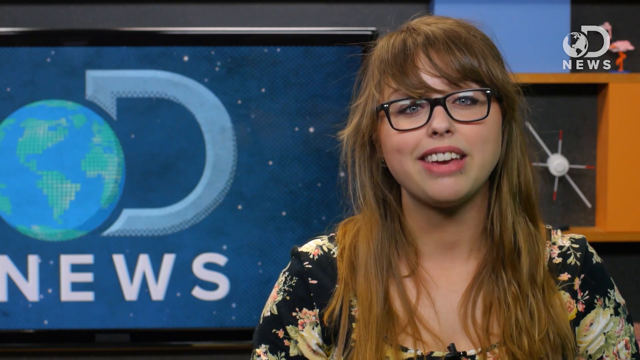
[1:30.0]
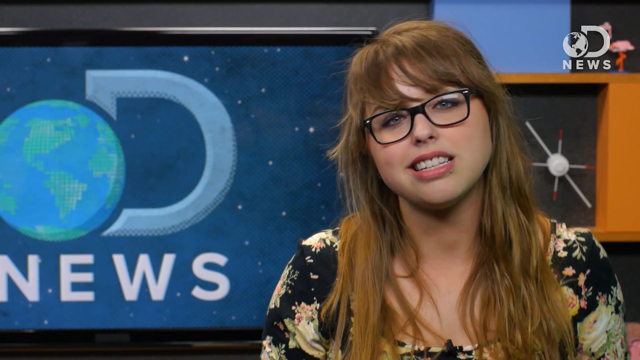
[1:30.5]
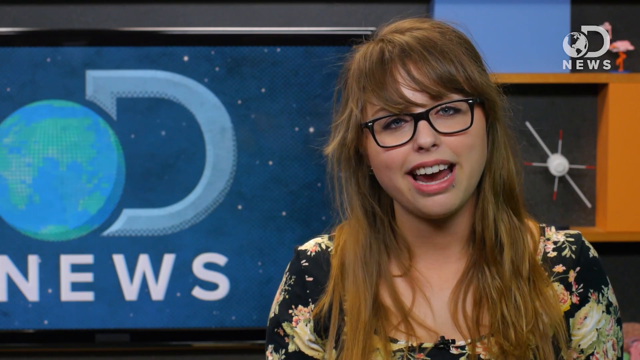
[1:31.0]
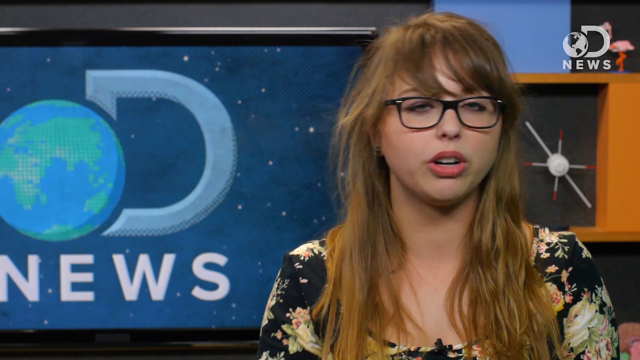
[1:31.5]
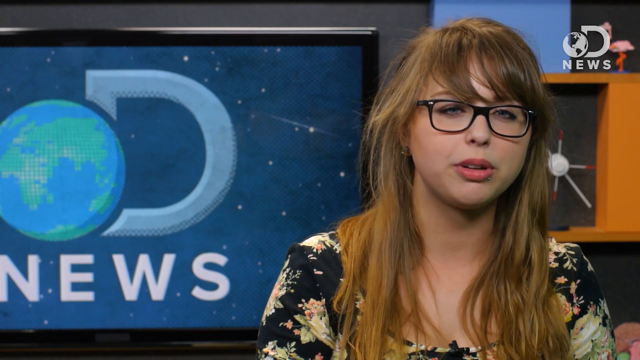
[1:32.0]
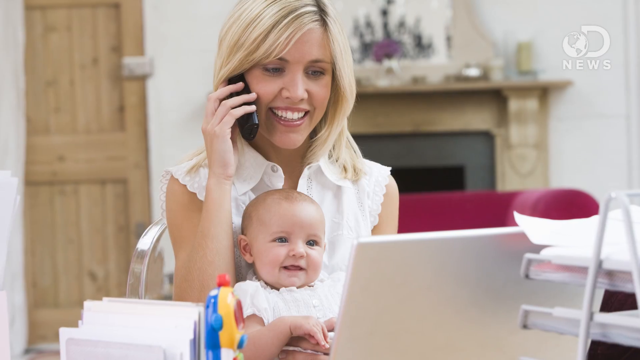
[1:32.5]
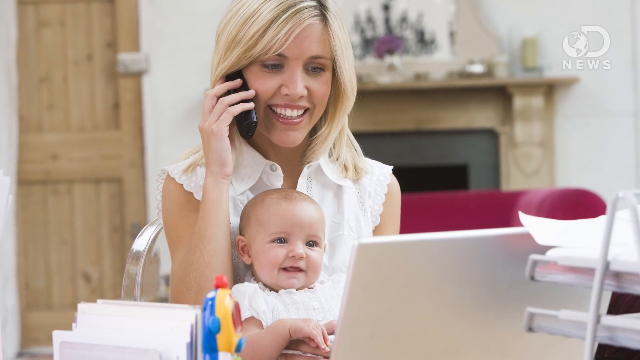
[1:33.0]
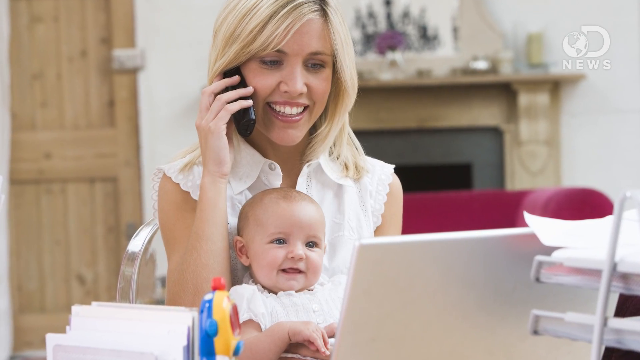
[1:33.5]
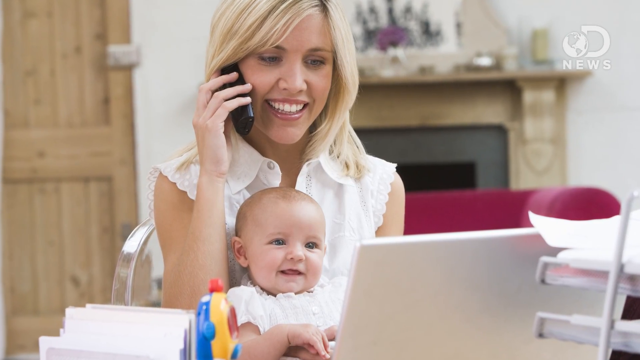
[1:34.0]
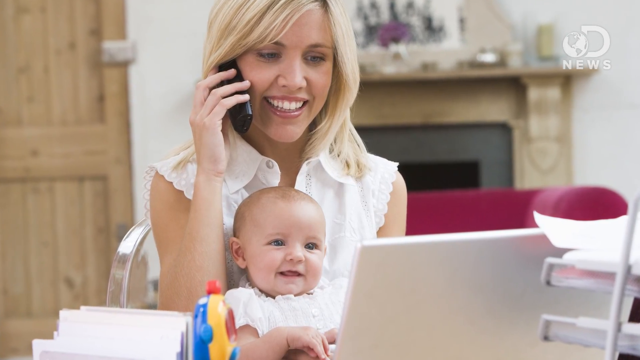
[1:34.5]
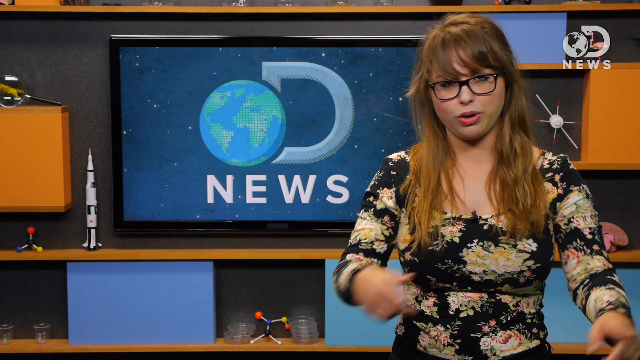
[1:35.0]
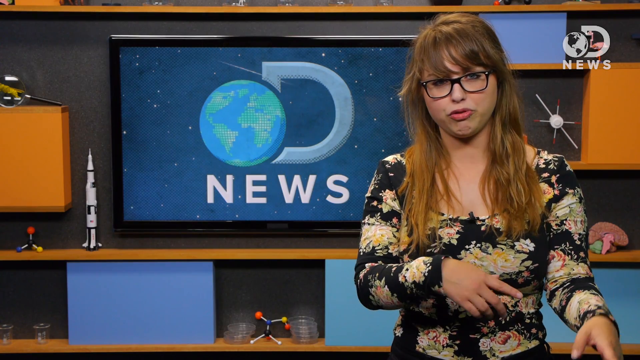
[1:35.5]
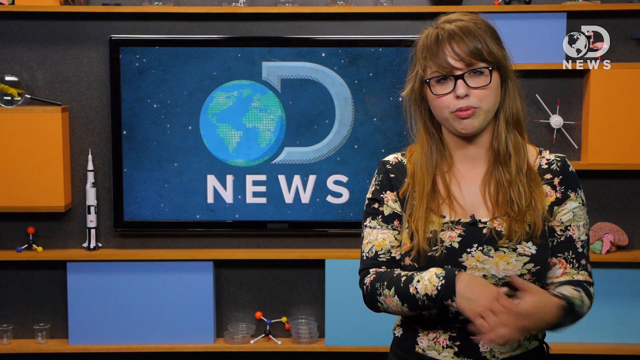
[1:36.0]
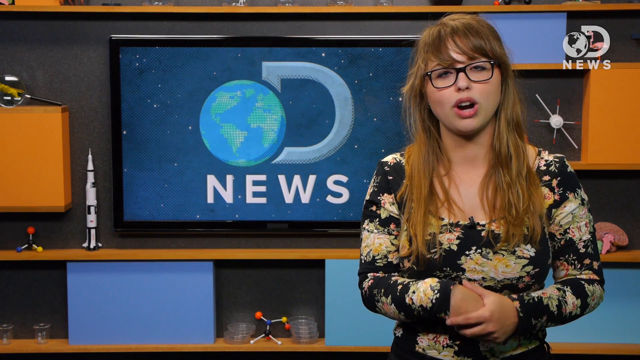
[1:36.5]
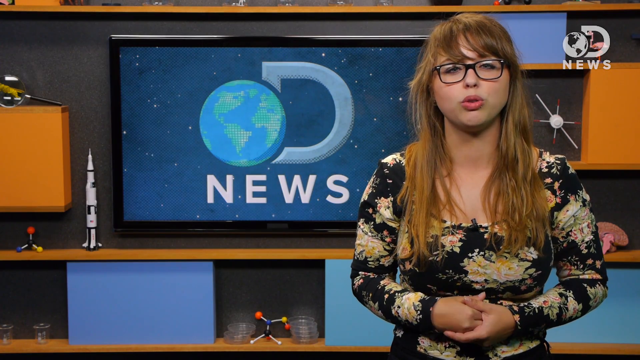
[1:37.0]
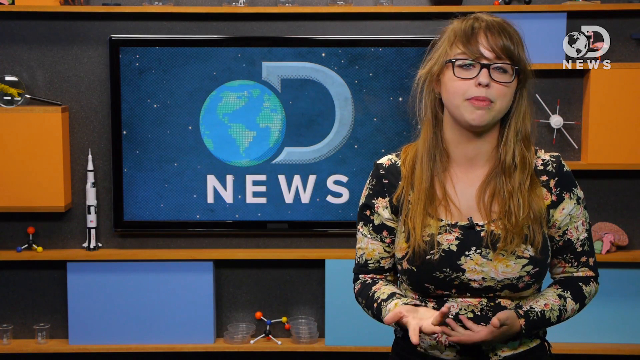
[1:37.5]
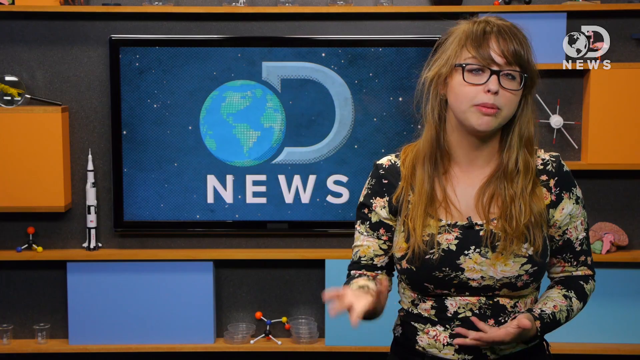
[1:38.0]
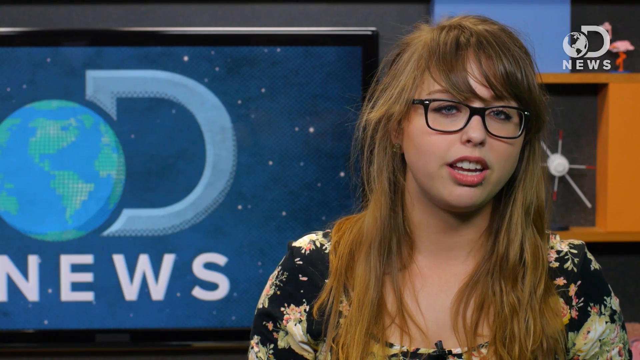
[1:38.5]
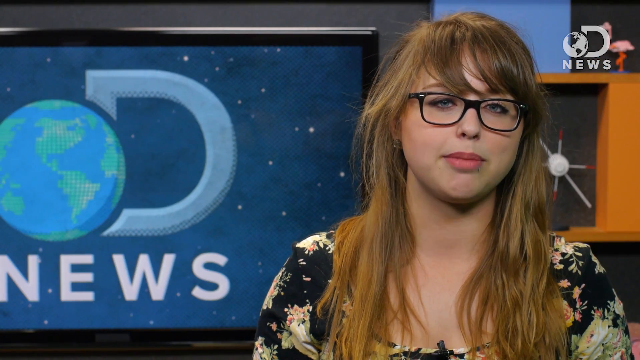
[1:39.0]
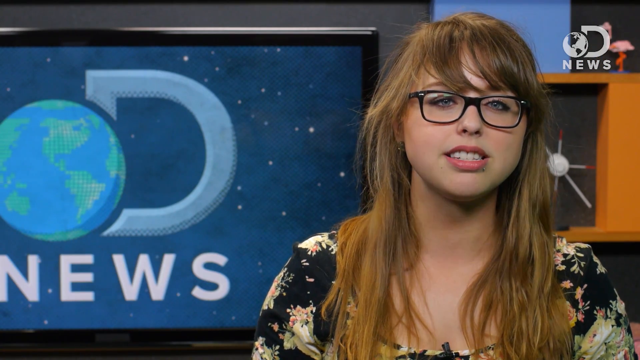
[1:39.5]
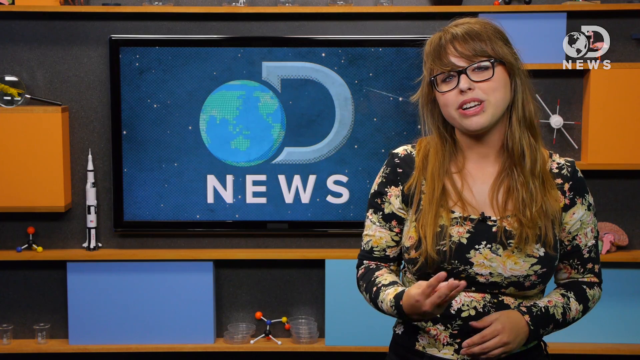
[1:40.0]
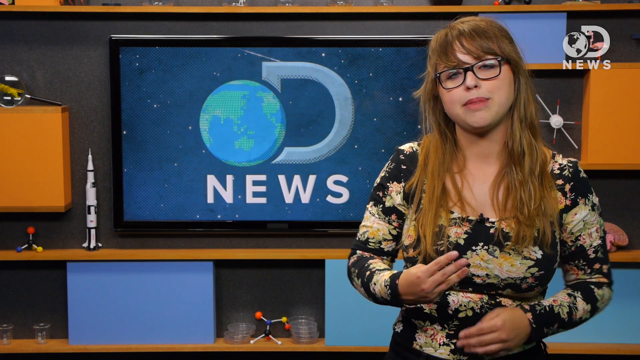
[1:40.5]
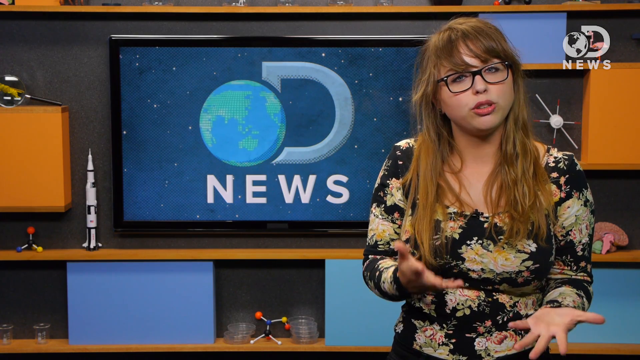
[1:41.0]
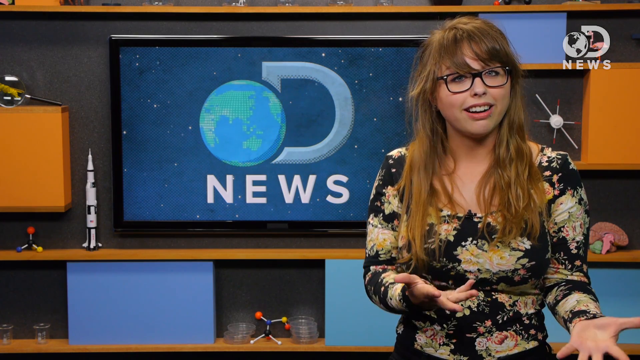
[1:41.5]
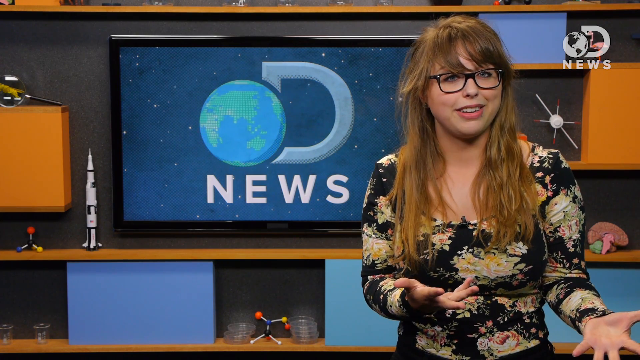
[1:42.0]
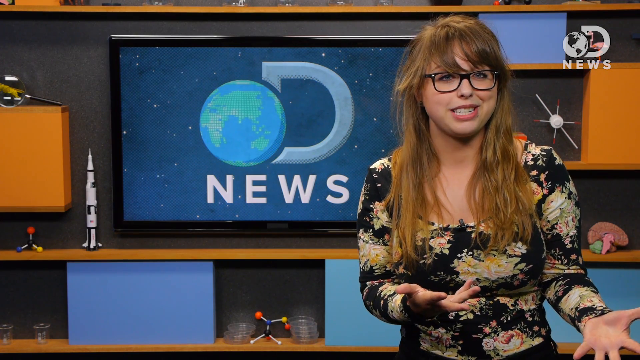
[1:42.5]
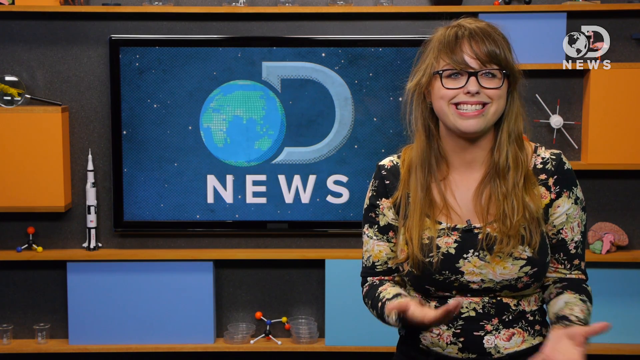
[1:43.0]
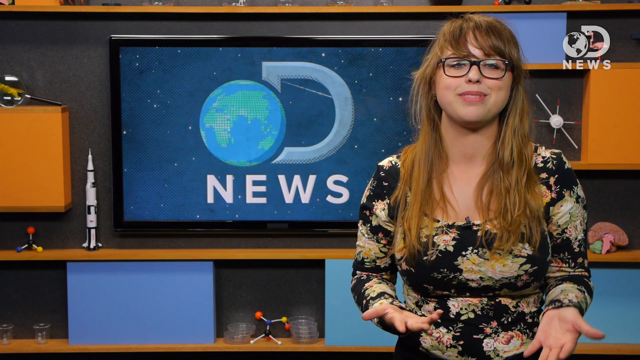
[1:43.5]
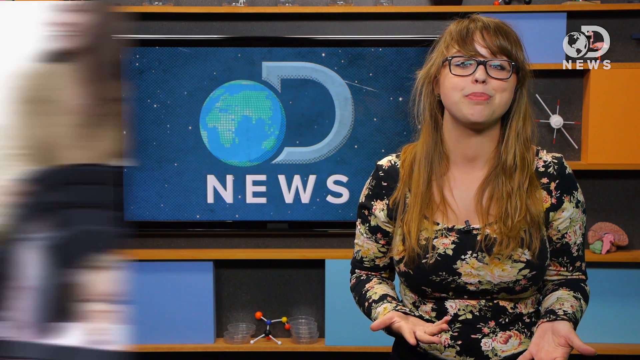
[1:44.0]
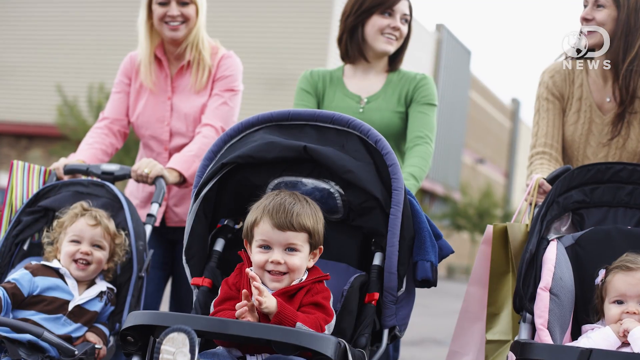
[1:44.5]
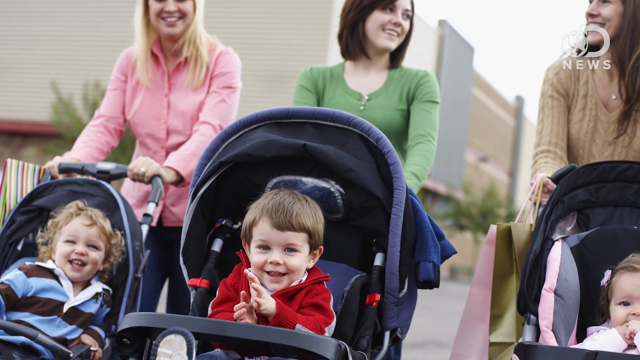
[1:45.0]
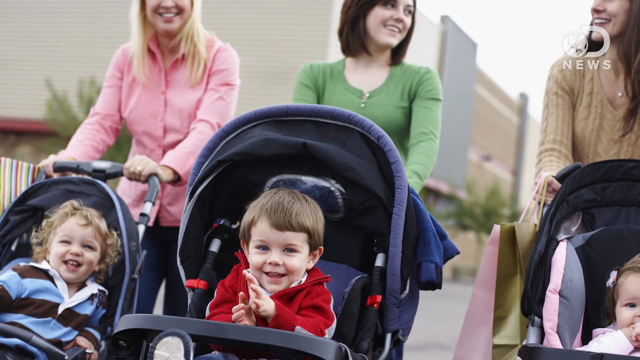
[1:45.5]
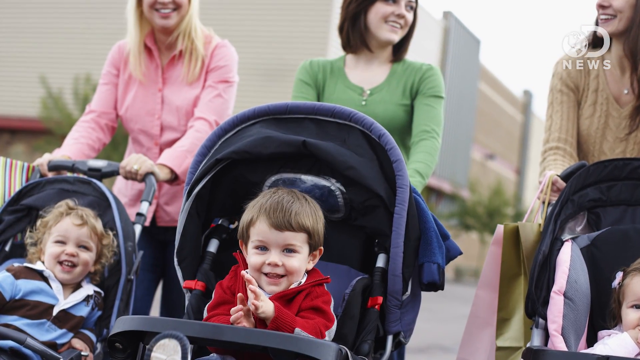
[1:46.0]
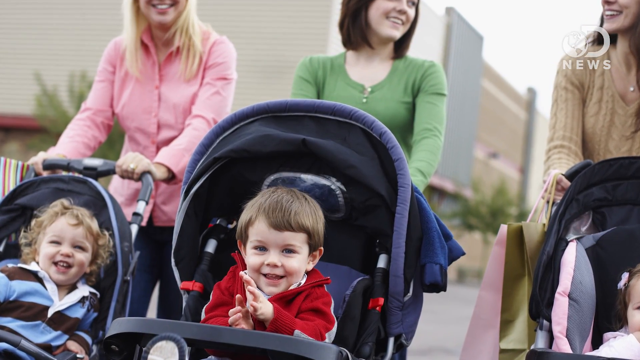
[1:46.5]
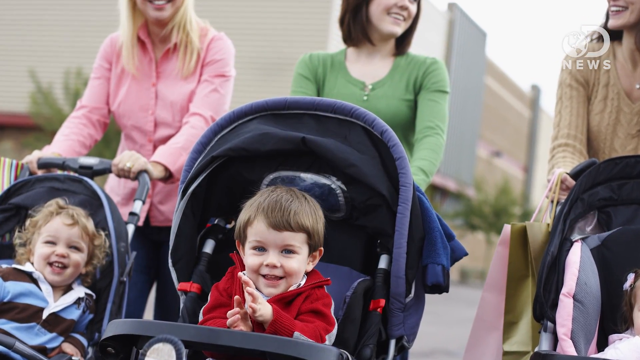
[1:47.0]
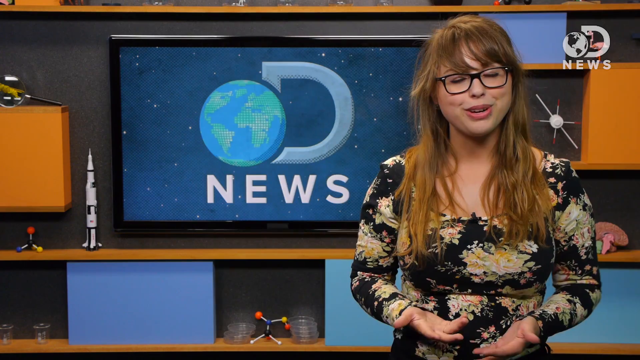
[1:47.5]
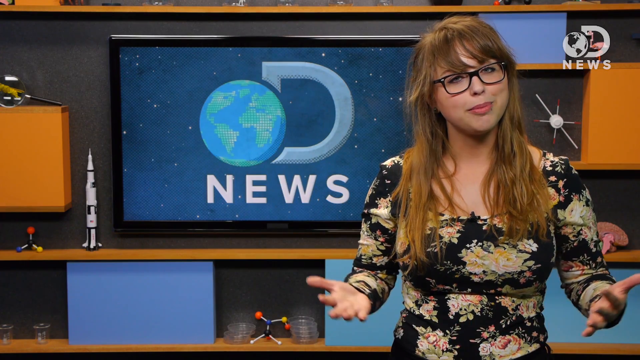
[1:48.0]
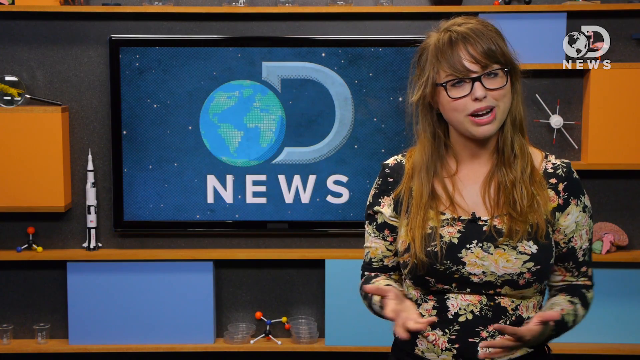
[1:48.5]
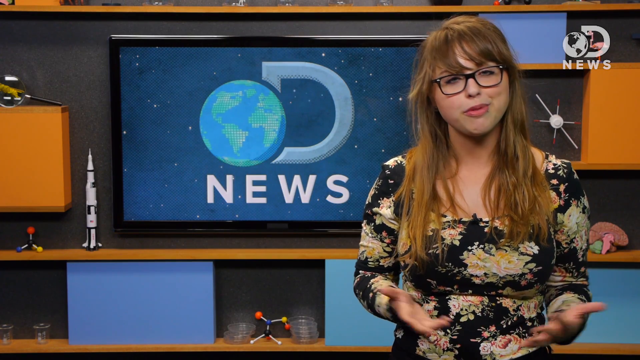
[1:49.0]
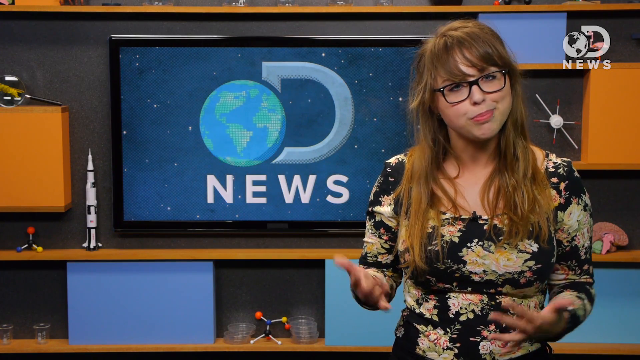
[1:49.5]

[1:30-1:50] A close-up shows the woman, who has a white skin tone, black glasses and brown, orange-ish hair; she is on the right side of the video. To her left behind her is a television showing the letter D, with a blue and green earth image to the left of the D and the word "news" below both. Behind the woman to the right is a pink flamingo on the top right shelf, with what appears to be a space-like toy below it. Another scene shows a woman in the middle of the screen holding what looks like a black cell phone. She has a white skin tone and blonde hair down to her shoulders, wears a white blouse, and has her baby in front of her. The baby, also with a white skin tone, looks at a silver-ish laptop in front of them. To the left of the laptop is a small yellow, blue and red baby toy. Behind them is the interior of a house, with a brown wooden door to her left and a fireplace to her right; the fireplace is dark black inside and tan on the outside. The scene returns to the woman talking to the camera with a lot of hand motions. Then three women are shown pushing three strollers, with each baby smiling toward the camera. The top left woman wears a pink shirt, the middle woman a green shirt, and the far right woman a brown shirt. The bottom left baby wears a blue shirt with black stripes and the bottom middle baby a red long-sleeve shirt; the bottom right baby cannot be seen.